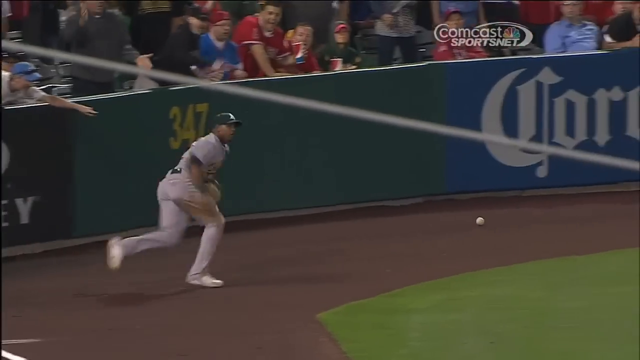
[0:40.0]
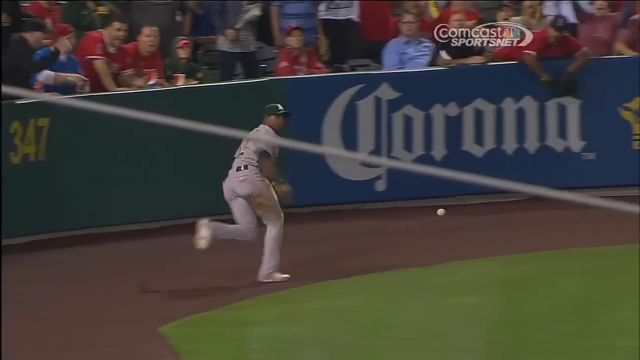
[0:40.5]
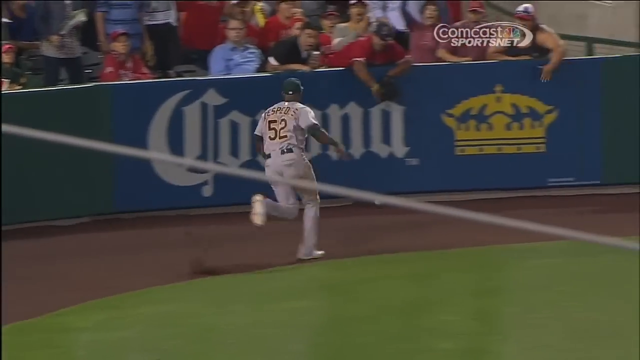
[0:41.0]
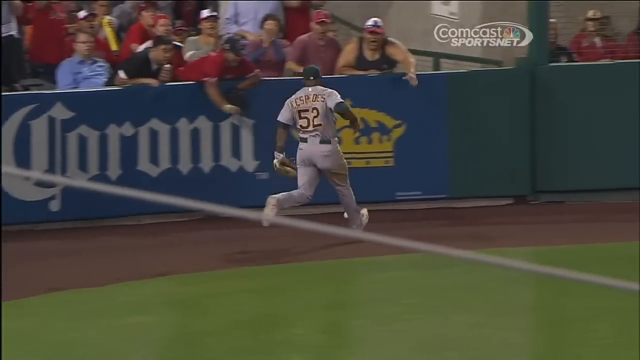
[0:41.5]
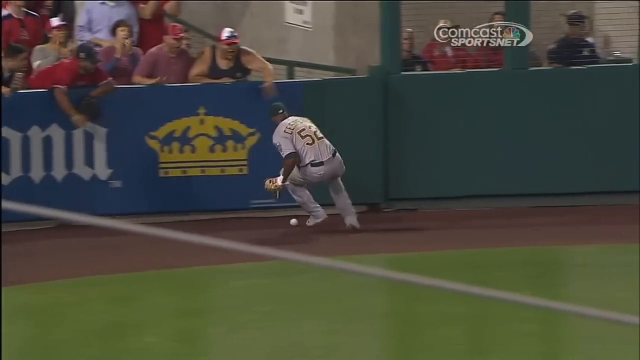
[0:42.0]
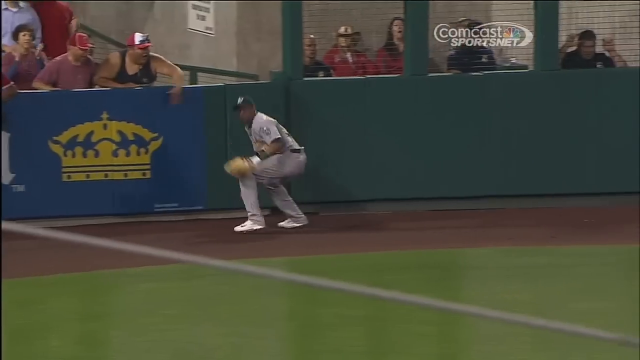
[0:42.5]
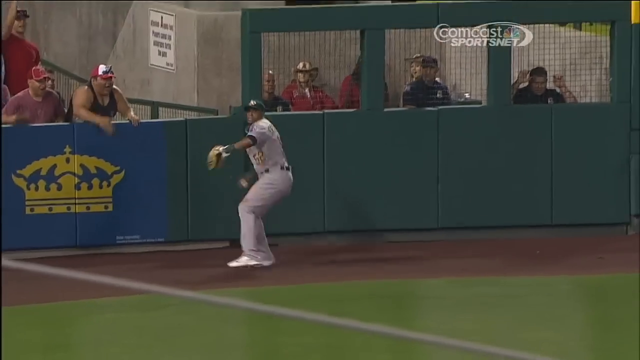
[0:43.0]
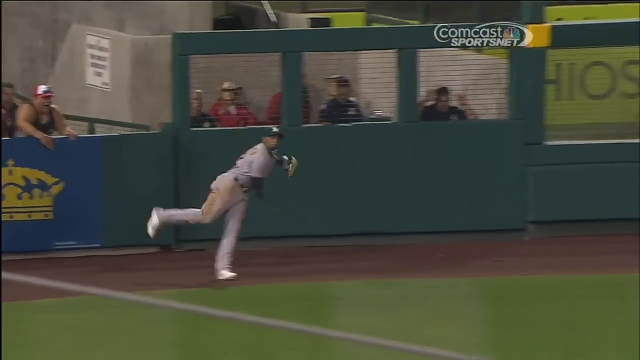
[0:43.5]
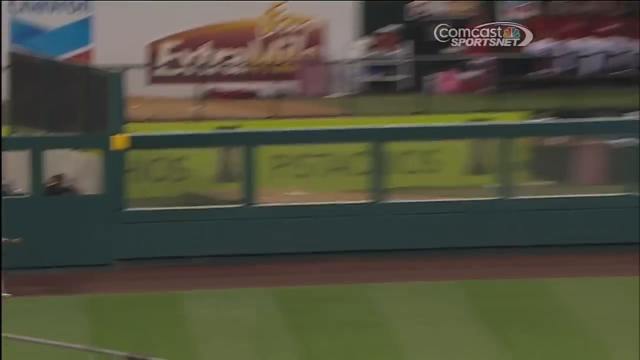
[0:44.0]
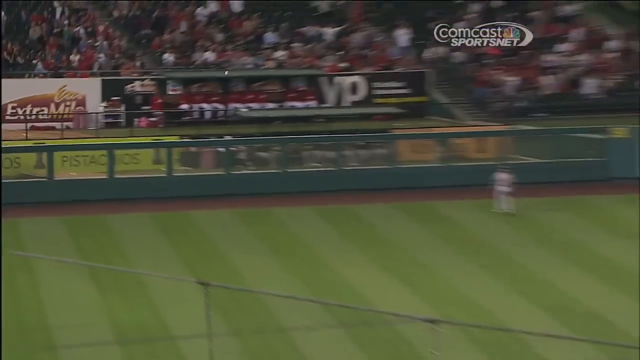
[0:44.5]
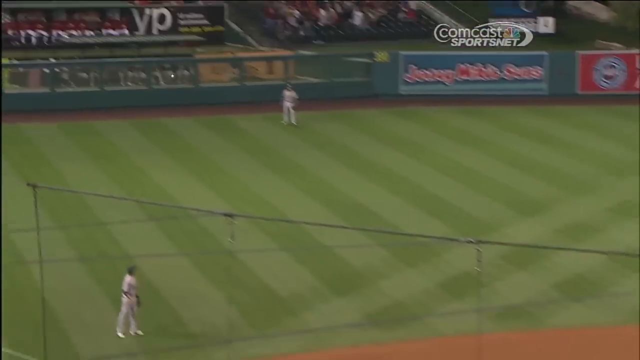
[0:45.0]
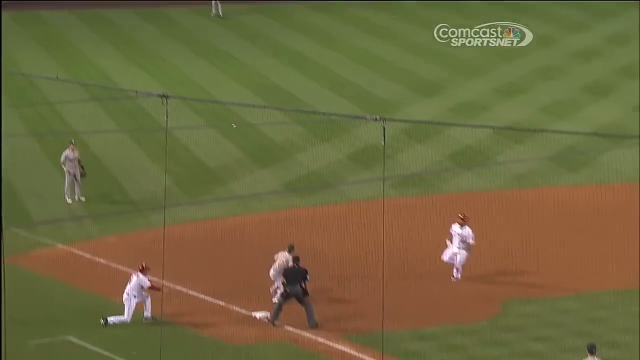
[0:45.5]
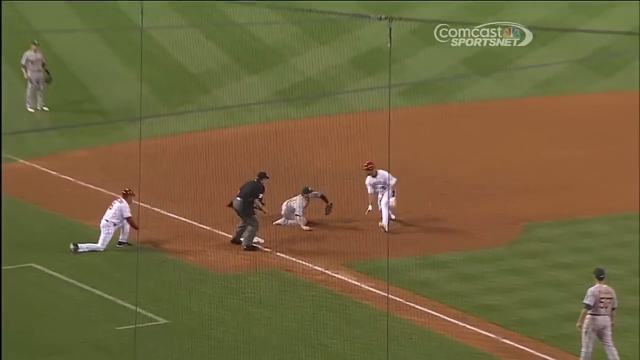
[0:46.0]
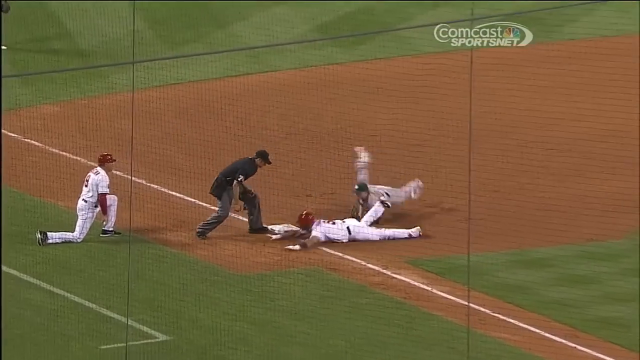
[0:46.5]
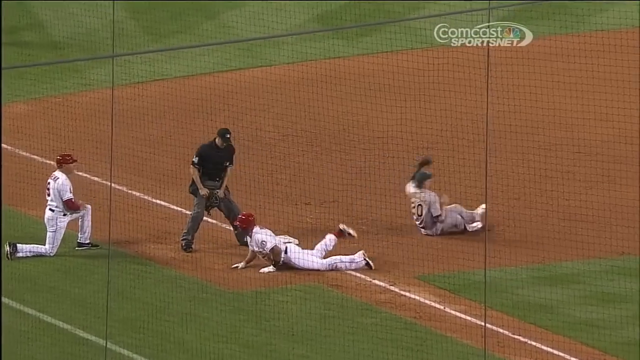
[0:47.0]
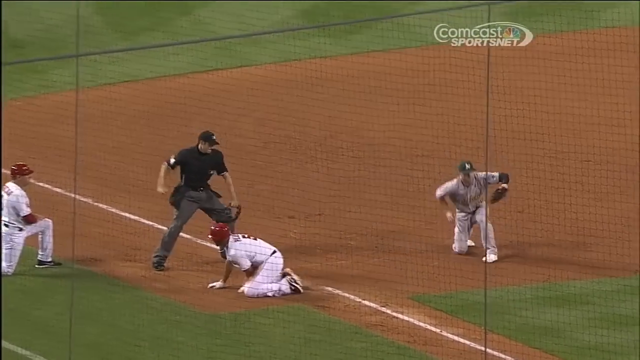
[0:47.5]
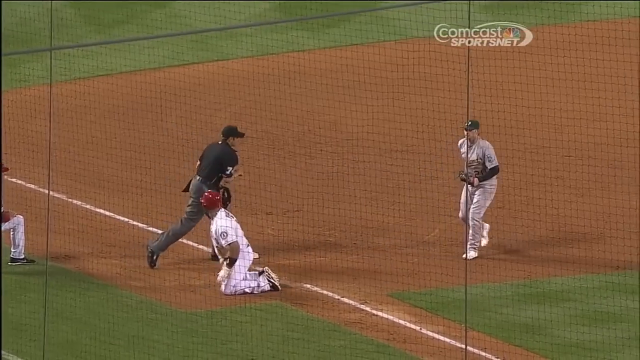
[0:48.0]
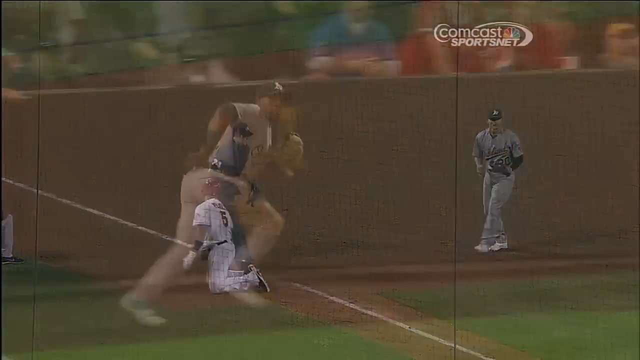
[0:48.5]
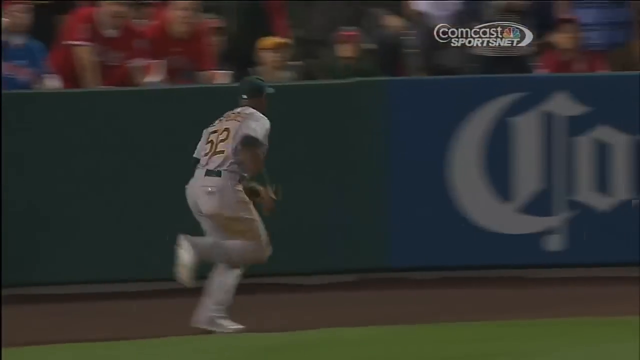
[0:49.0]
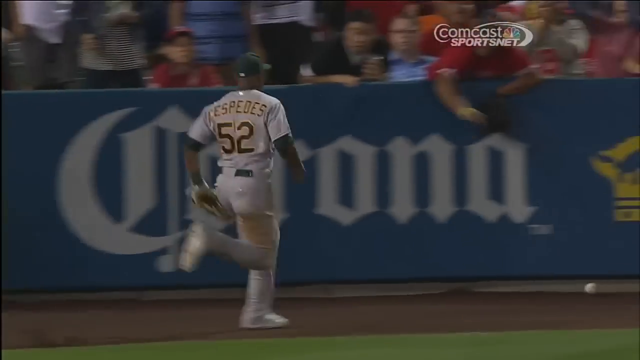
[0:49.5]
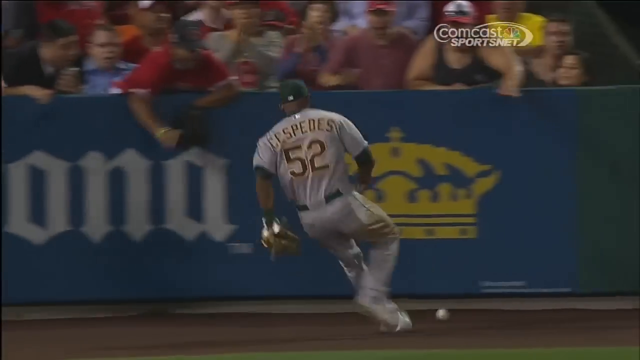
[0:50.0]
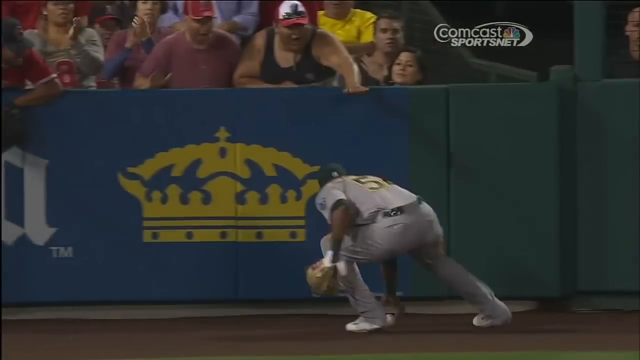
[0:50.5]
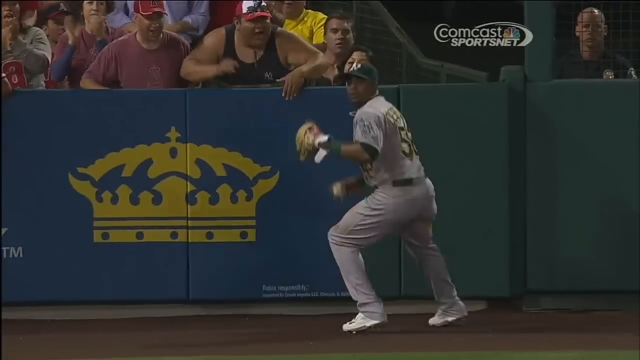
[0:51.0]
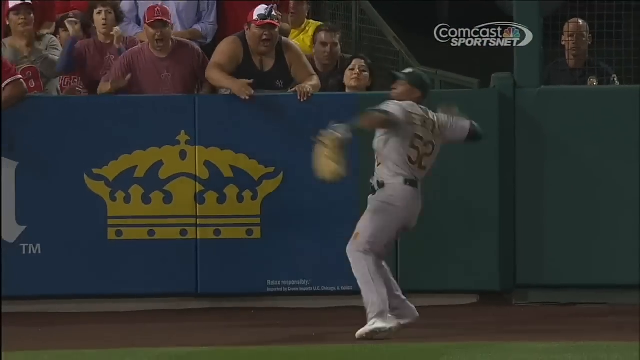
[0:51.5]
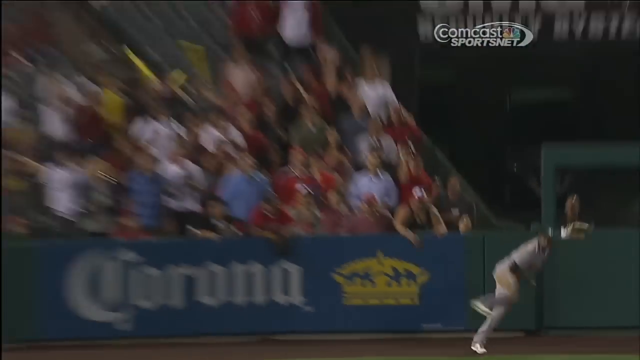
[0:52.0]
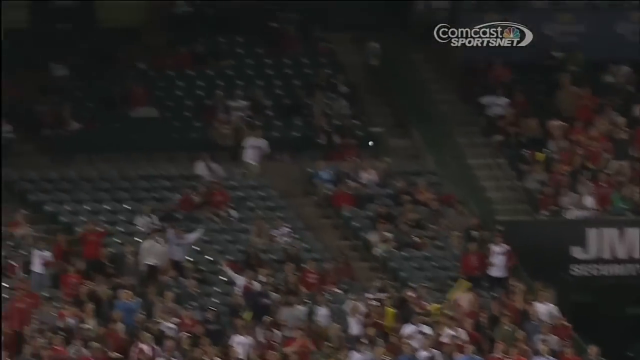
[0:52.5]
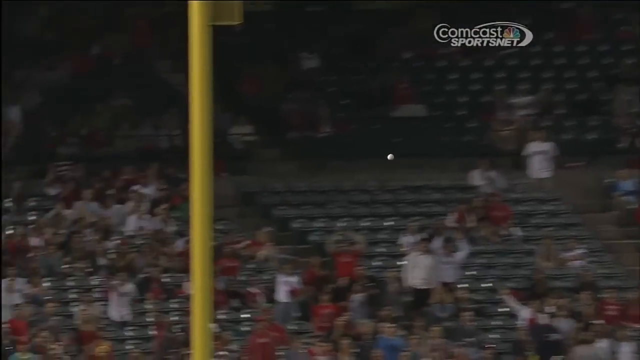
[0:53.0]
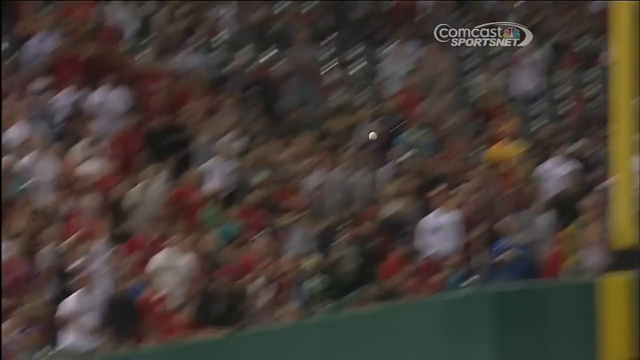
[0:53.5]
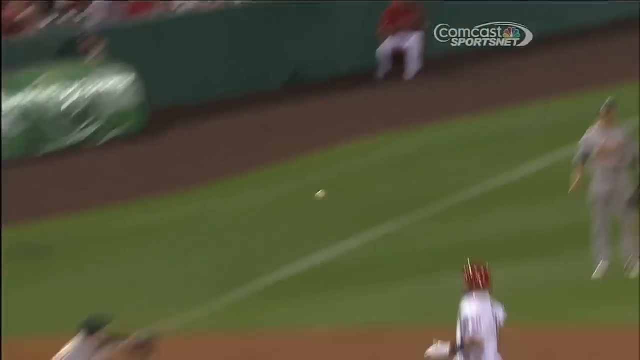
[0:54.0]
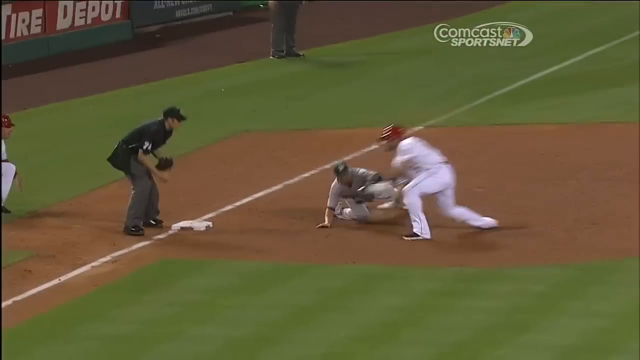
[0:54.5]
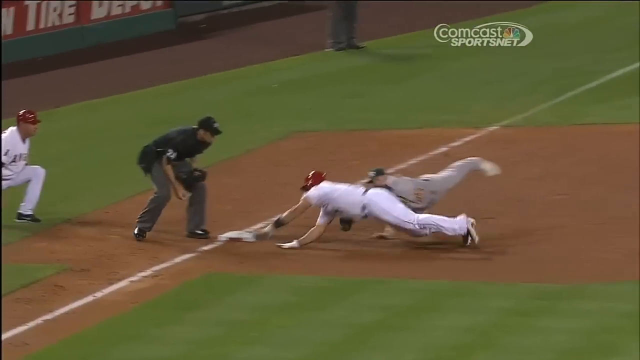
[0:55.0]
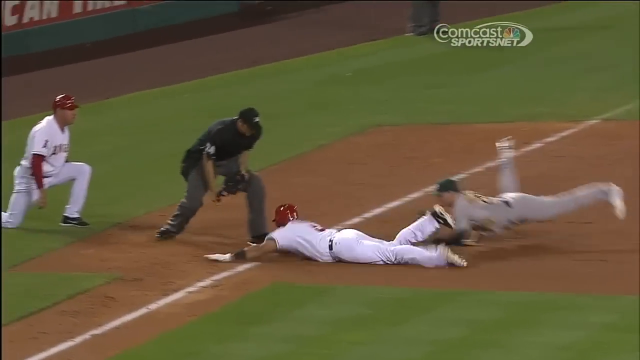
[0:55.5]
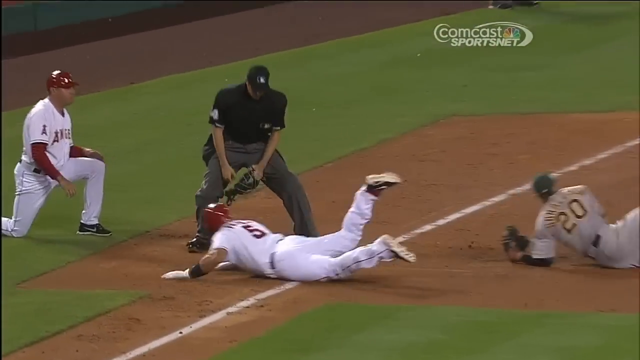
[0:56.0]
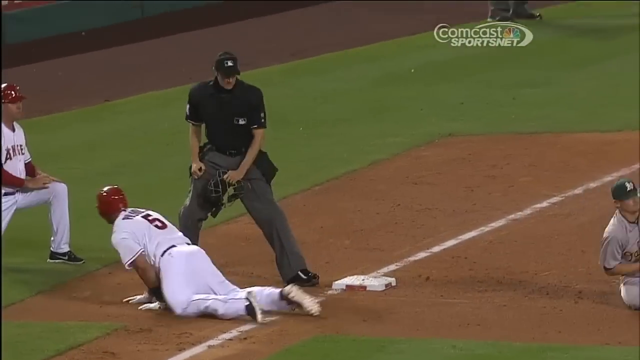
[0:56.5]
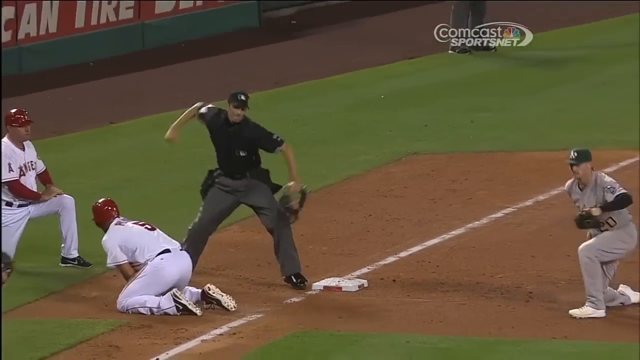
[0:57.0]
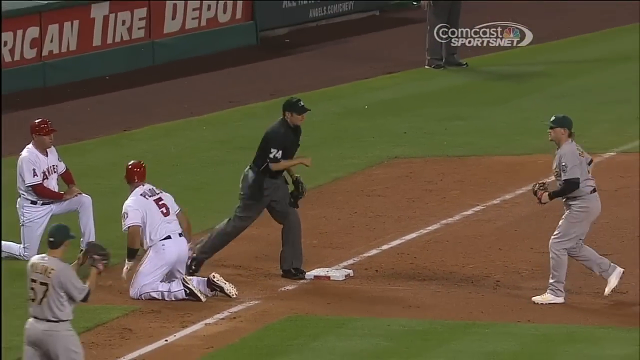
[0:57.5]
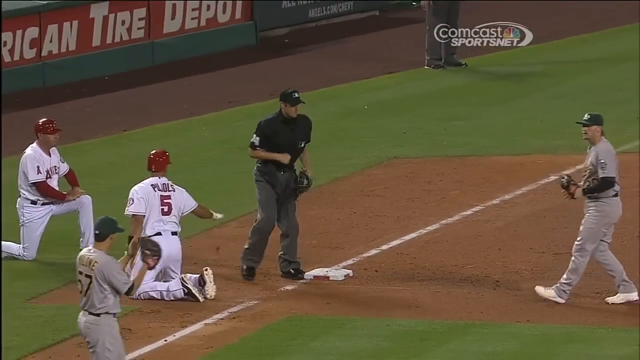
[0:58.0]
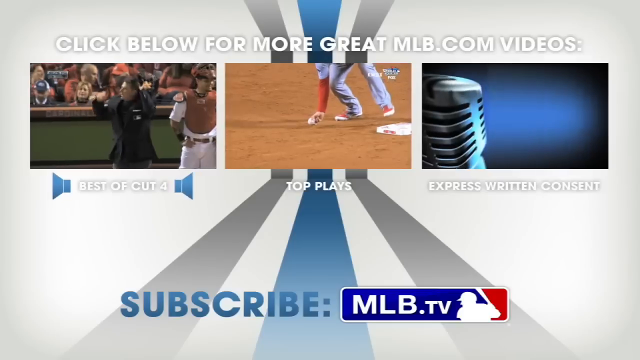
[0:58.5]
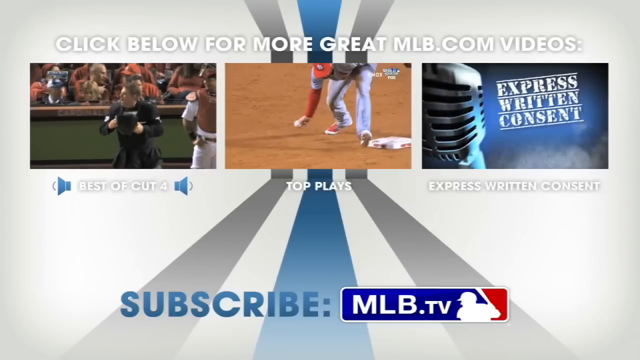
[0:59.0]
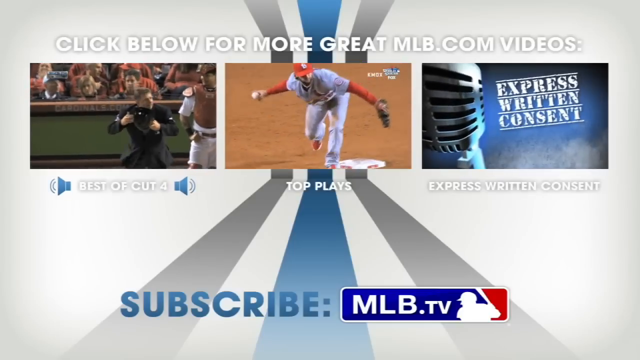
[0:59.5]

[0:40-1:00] Further footage from the Oakland and Los Angeles game begins with player number 52 running out of bounds toward the crowd to catch a ground ball. As he nears the crowd, an advertisement for Corona is visible on the display. He quickly grabs the ball with his right hand, pivots around and throws it to the infield, lifting his right leg to power the throw forward. The infield player at third base catches the ball and tags the incoming runner. The third base umpire, dressed in an all-black uniform, calls the play by striking his hand down on the right side, signaling that the player is out. The scene cuts to the same play from another angle: number 52 for Oakland chases the ground ball toward the crowd, crouches down, picks it up with his right hand and throws it to the third base player, who tags the runner out.